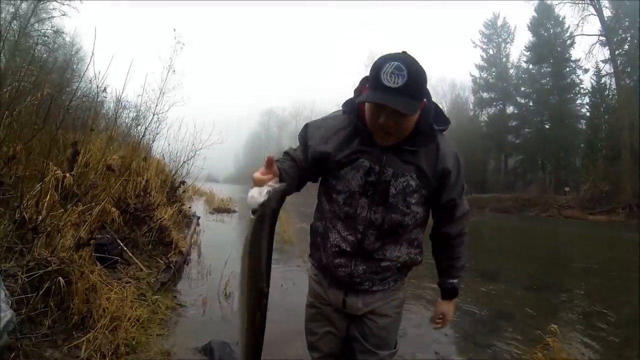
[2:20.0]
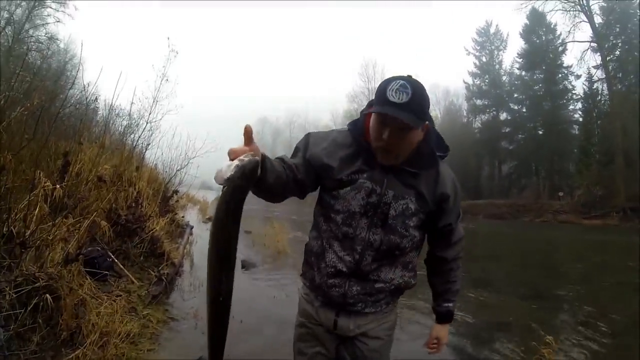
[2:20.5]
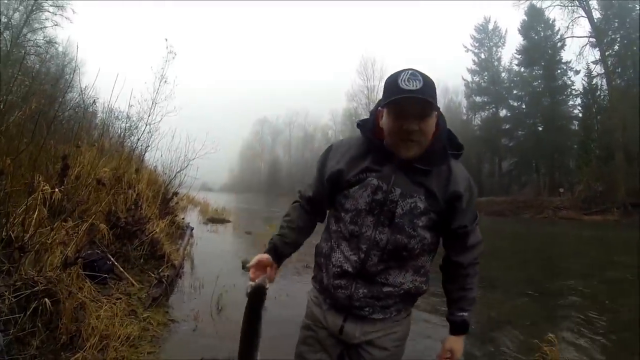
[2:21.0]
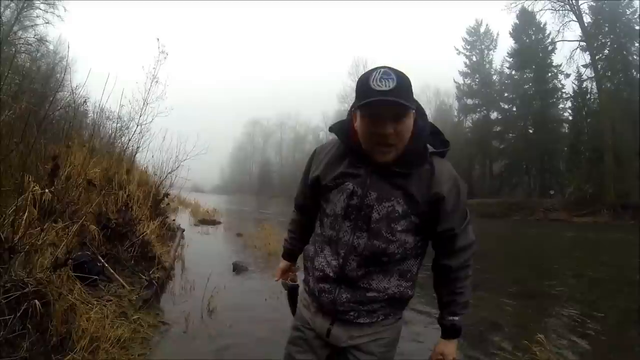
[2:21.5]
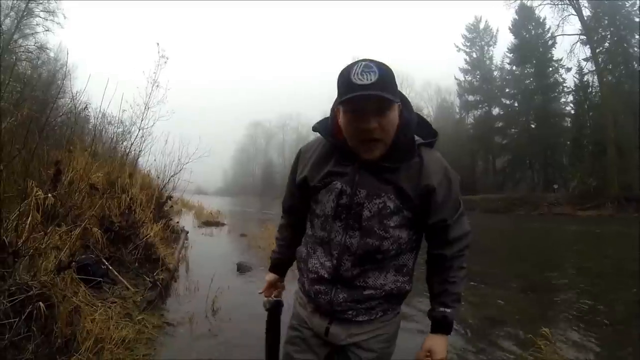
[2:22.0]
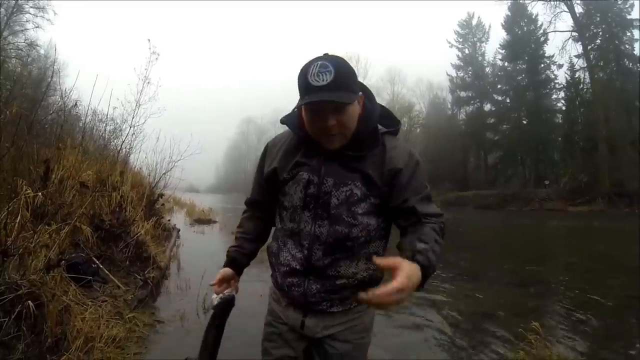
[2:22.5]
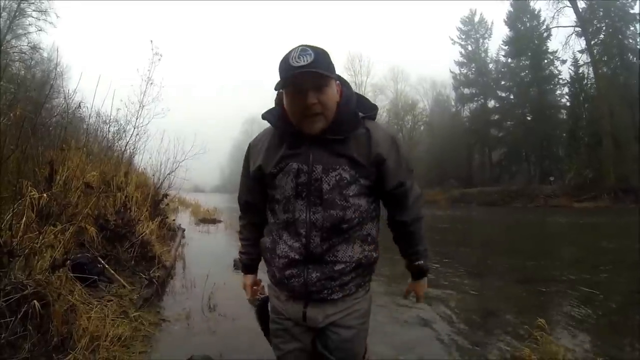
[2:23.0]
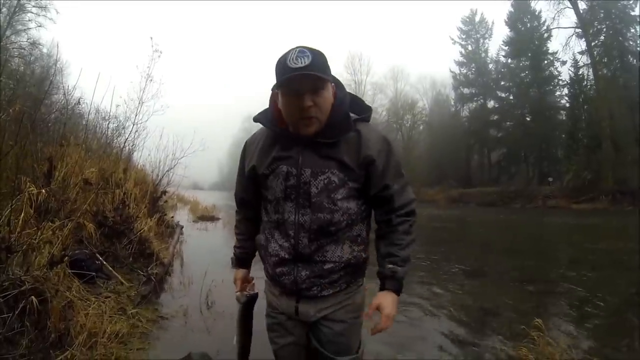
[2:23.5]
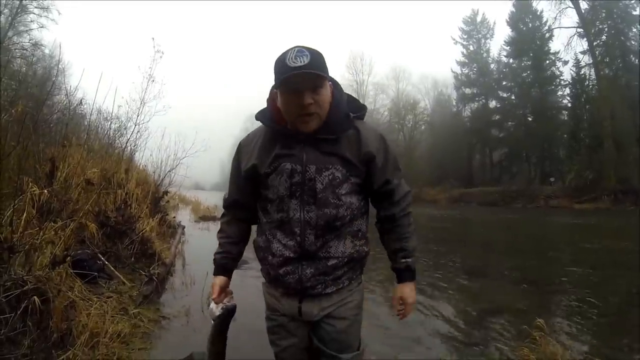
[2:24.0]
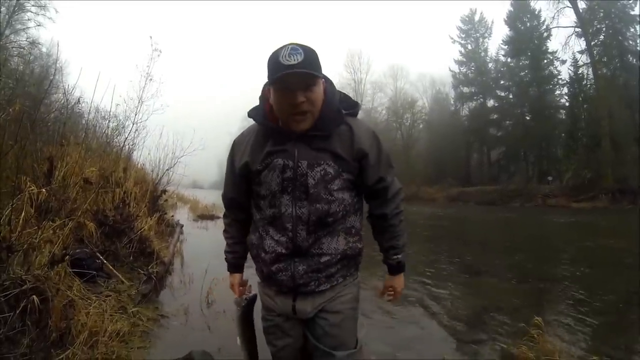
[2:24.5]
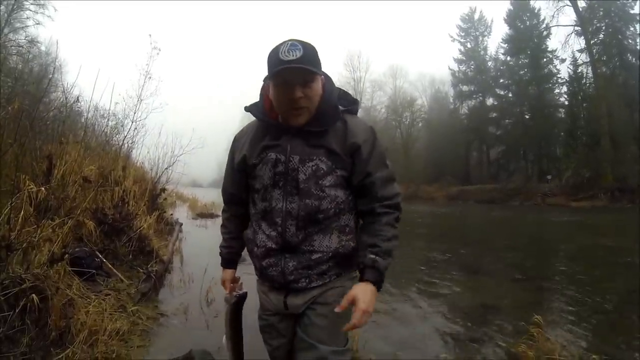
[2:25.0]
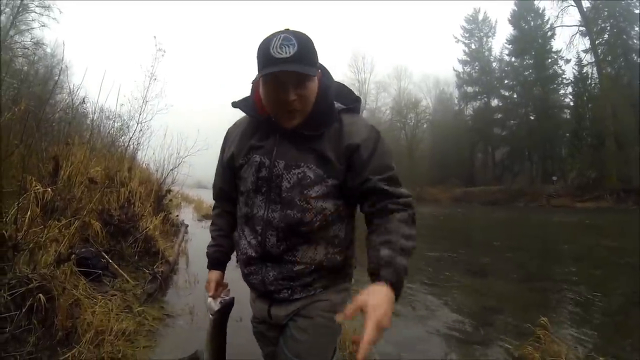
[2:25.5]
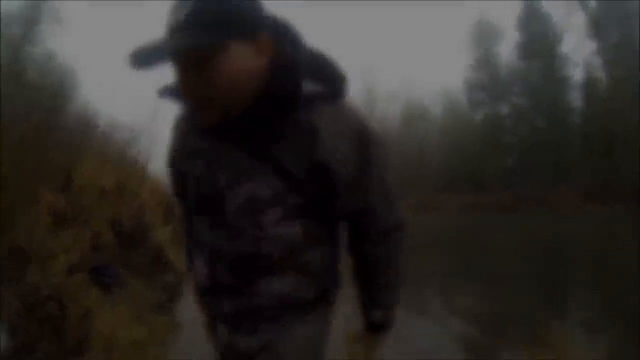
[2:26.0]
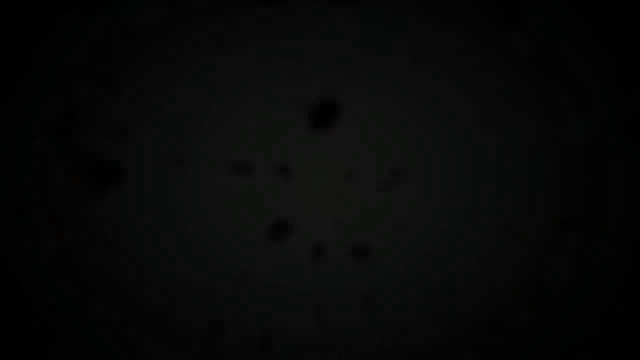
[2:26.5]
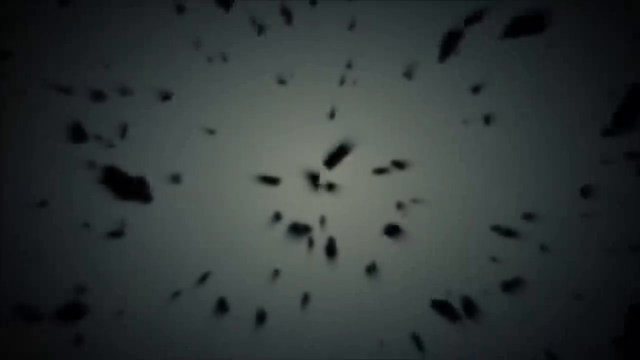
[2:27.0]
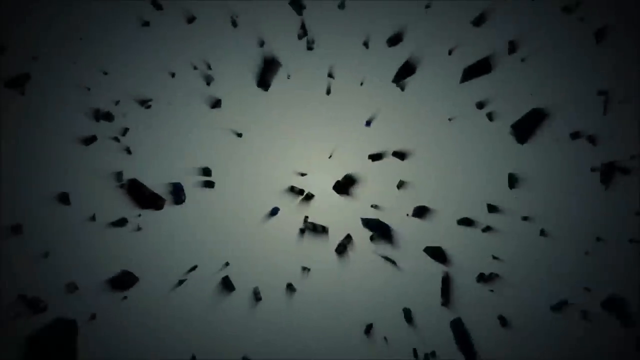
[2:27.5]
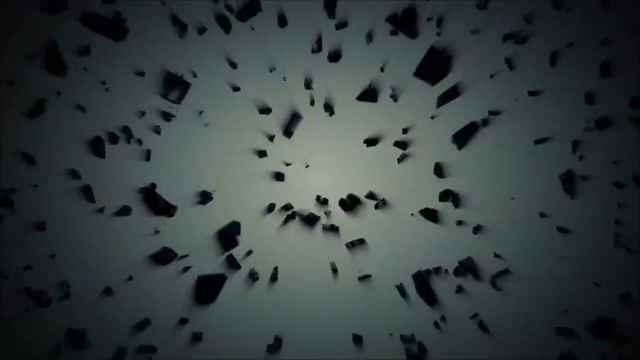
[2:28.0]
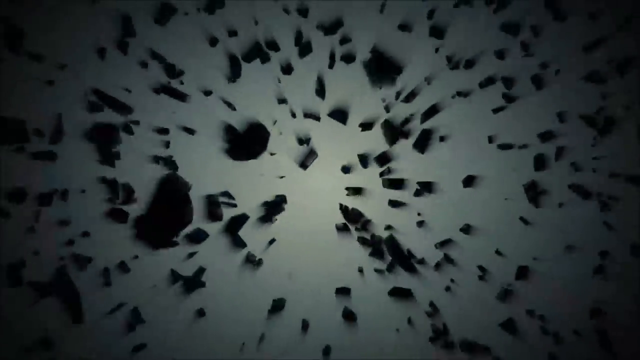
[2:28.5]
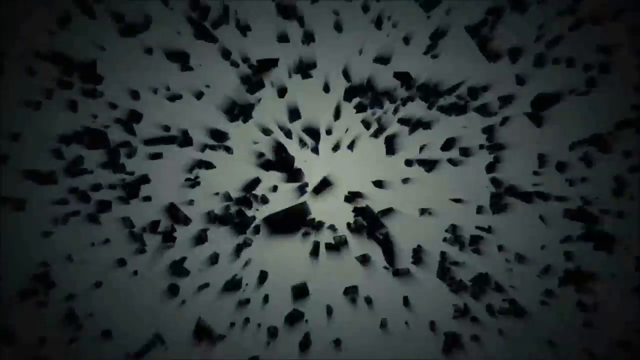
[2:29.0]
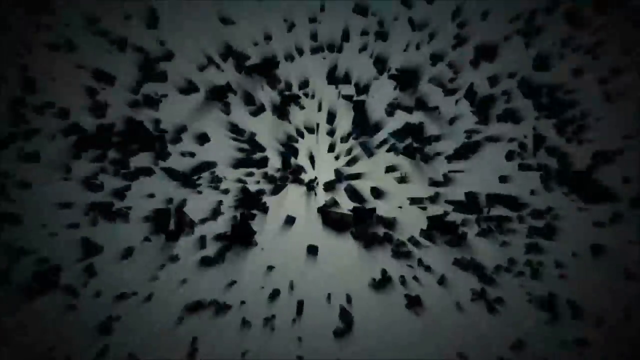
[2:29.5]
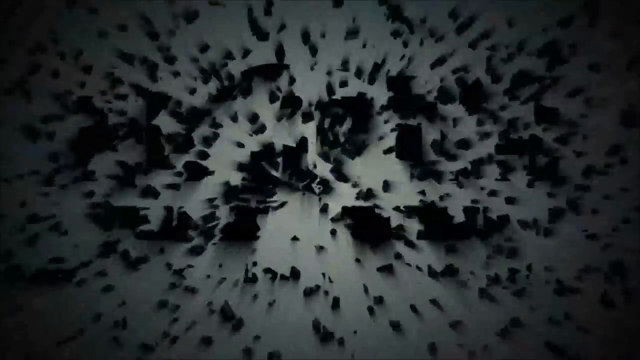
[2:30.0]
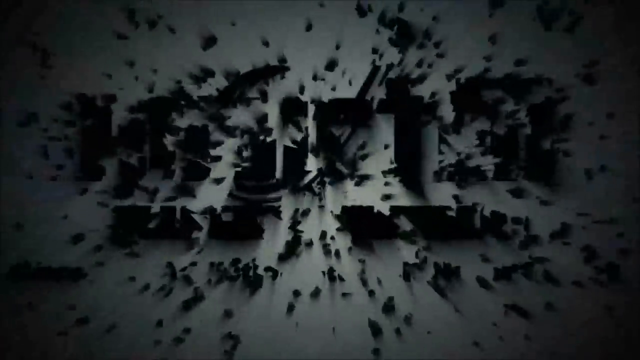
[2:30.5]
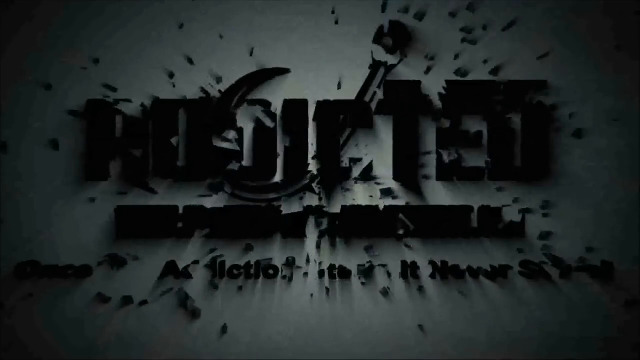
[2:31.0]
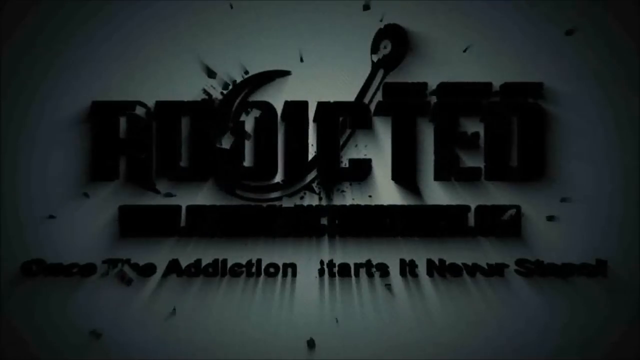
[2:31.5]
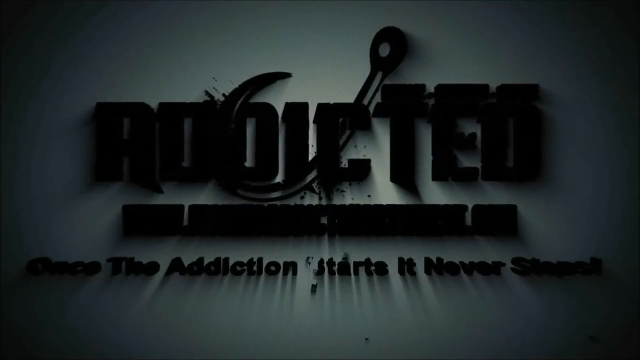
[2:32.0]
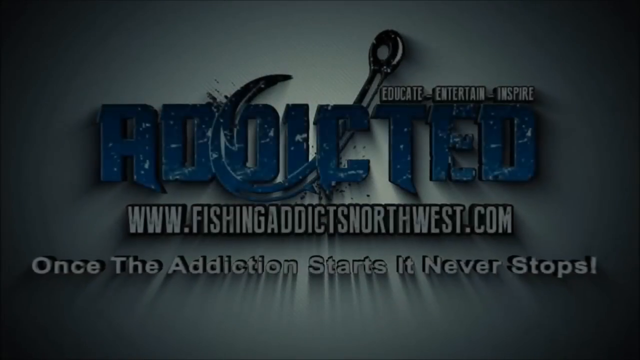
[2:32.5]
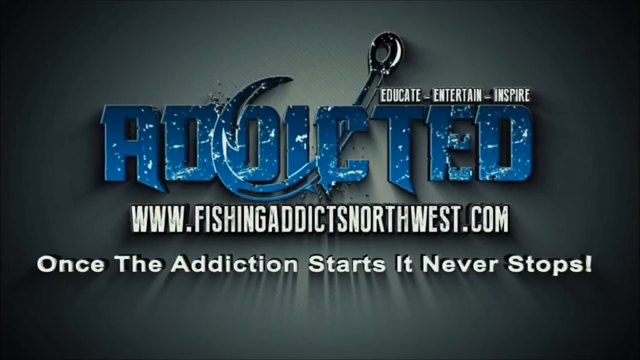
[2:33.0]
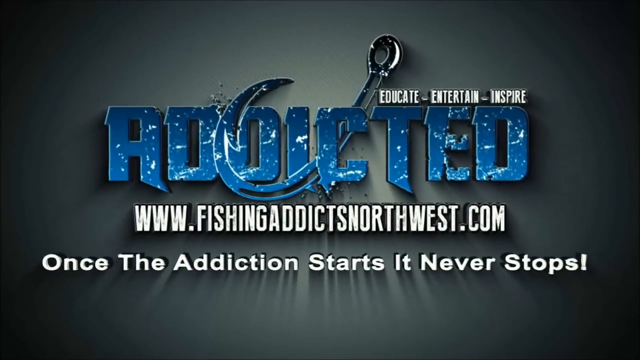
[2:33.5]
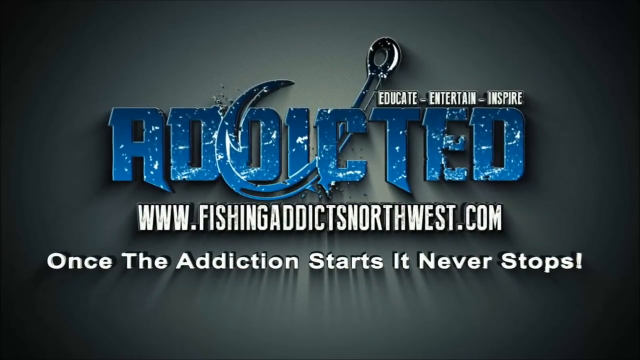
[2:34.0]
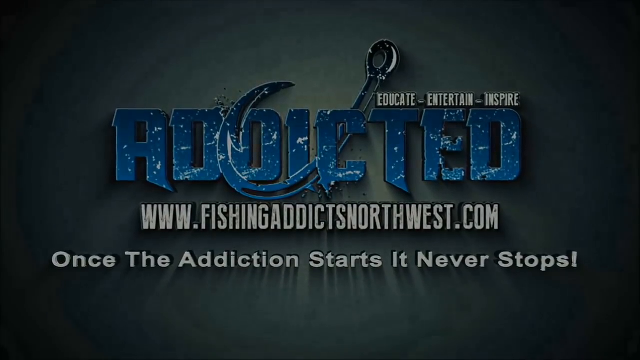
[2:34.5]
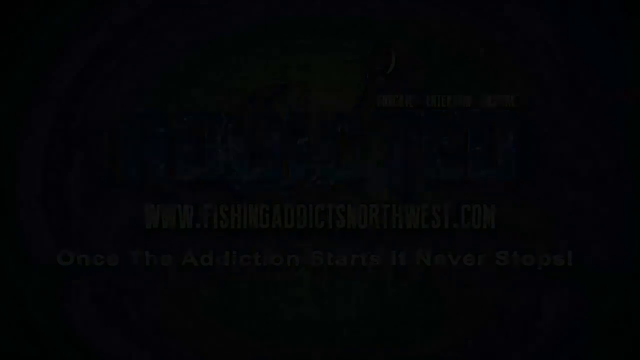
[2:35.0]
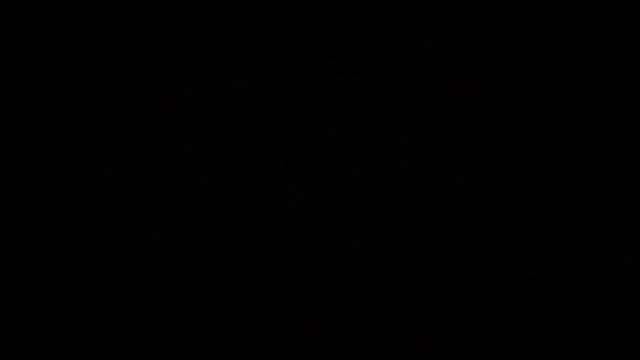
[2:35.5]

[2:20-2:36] At the end, the man stands looking at the camera and talking, holding the fish in his right hand with two fingers hooked in its gills. He lifts the fish up toward the camera, then lowers it so it hangs at his side, his left hand hanging by his other side, and turns toward the bank. A circular, bright green Addicted to Fishing logo comes on. After that, what looks like a school of fish swims together to form the Addicted to Fishing logo seen at the beginning of the video. Two advertisements are on the screen, and above the Addicted to Fishing logo, which is in blue, three white words read "educate", "entertain" and "inspire".